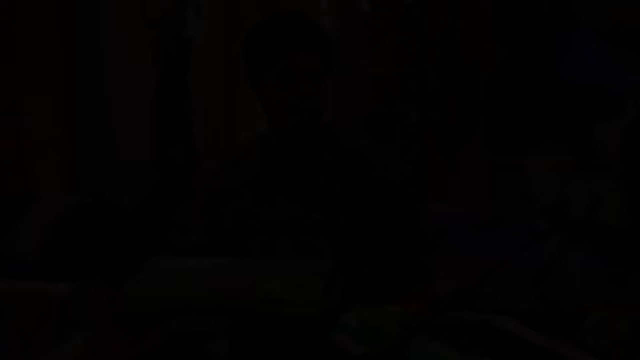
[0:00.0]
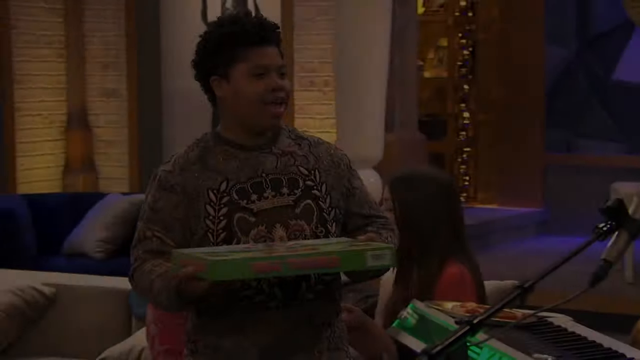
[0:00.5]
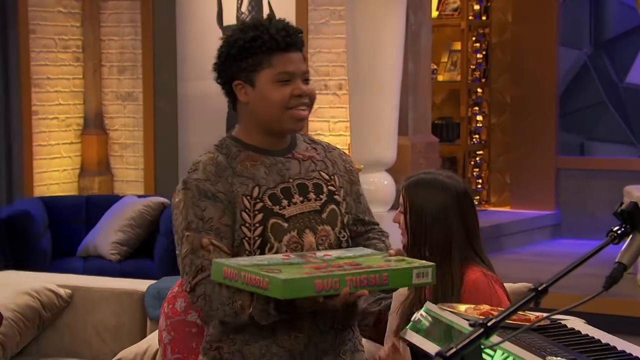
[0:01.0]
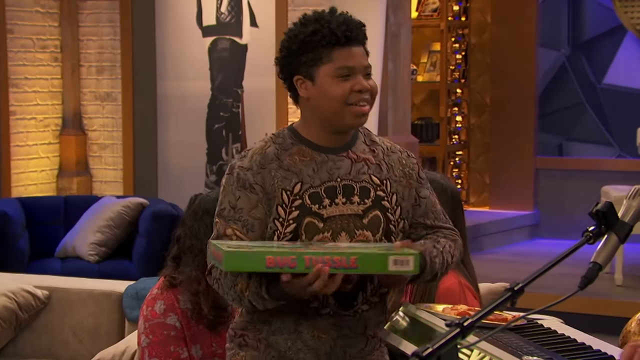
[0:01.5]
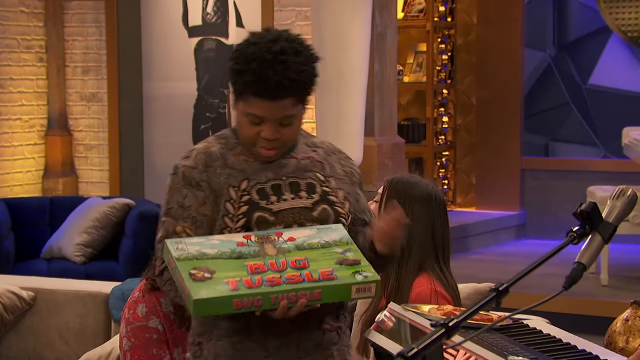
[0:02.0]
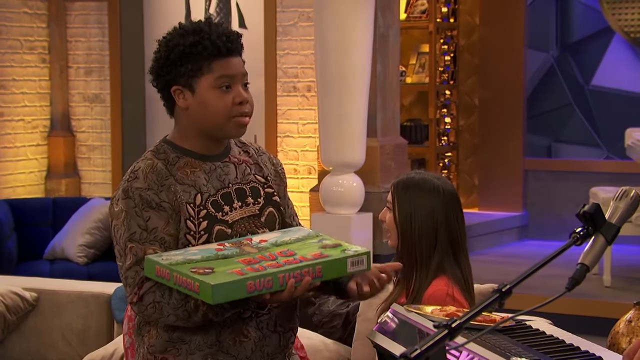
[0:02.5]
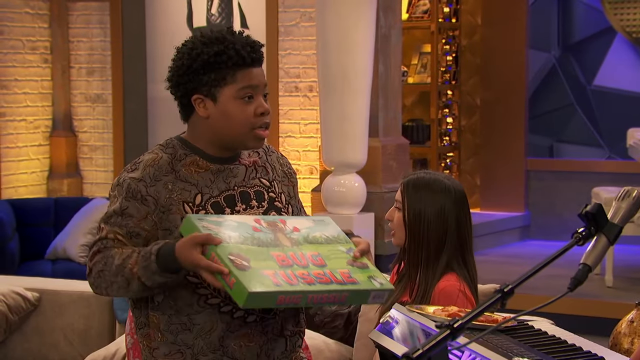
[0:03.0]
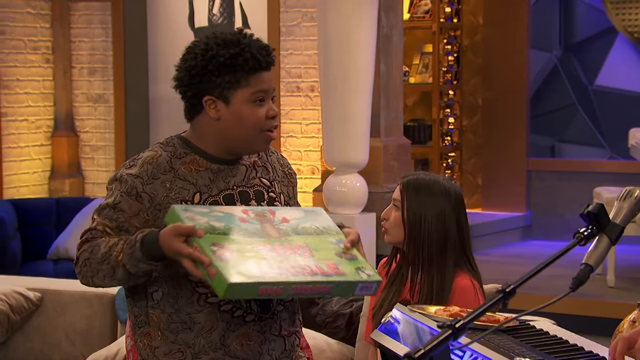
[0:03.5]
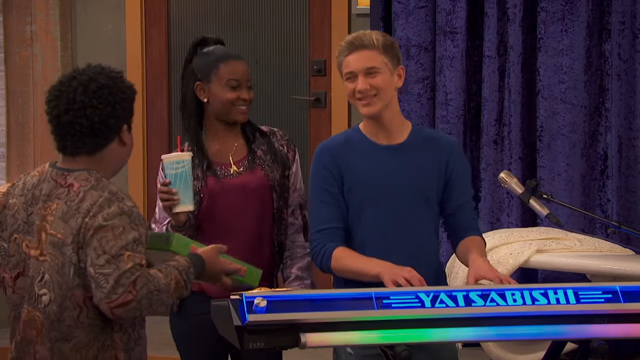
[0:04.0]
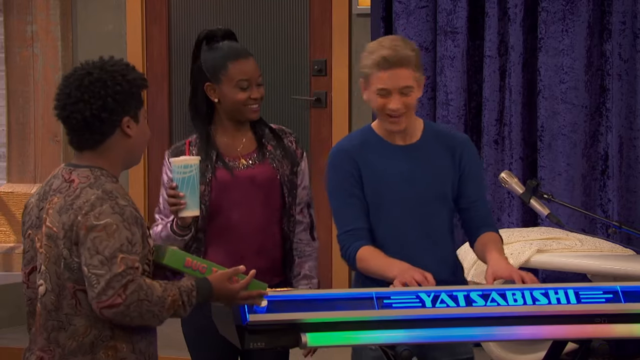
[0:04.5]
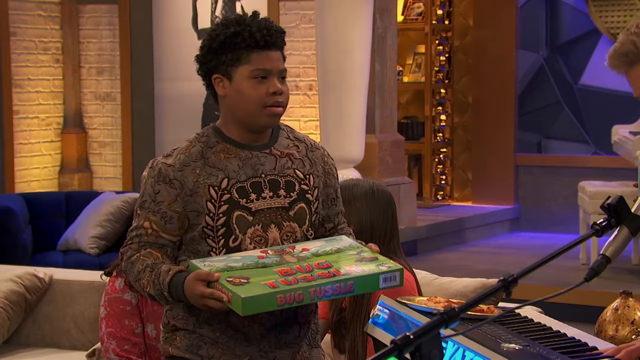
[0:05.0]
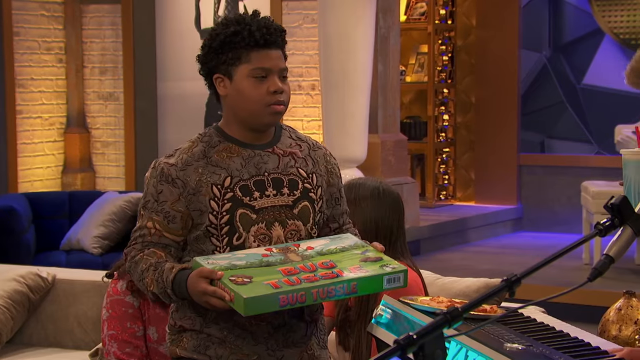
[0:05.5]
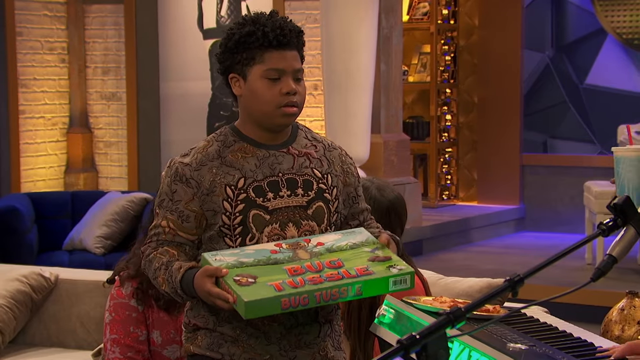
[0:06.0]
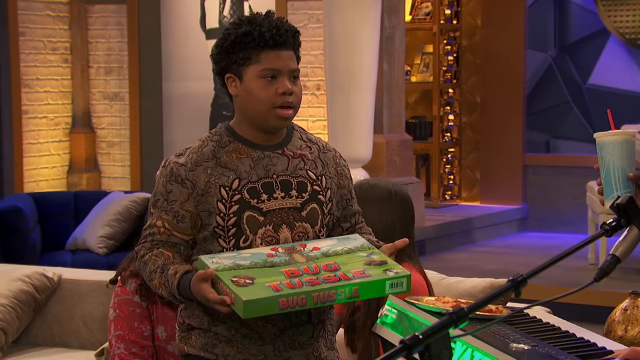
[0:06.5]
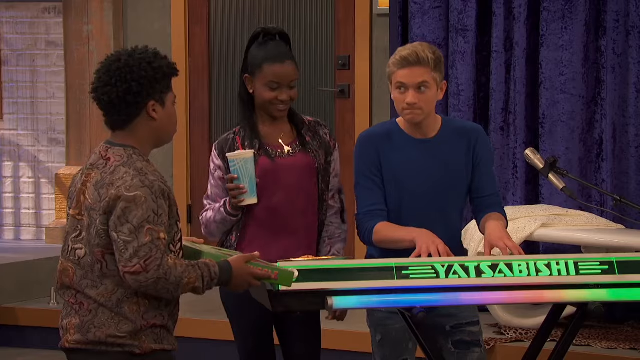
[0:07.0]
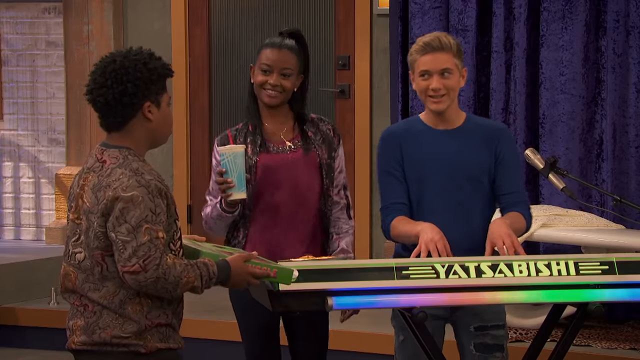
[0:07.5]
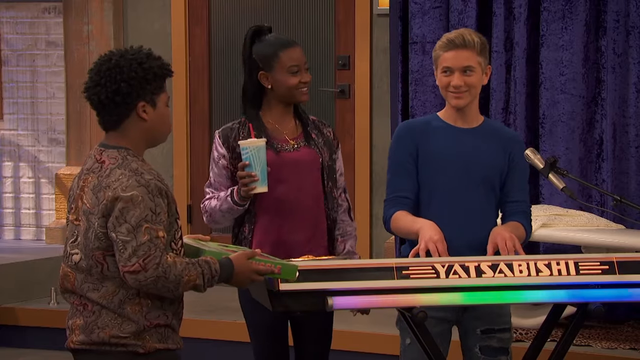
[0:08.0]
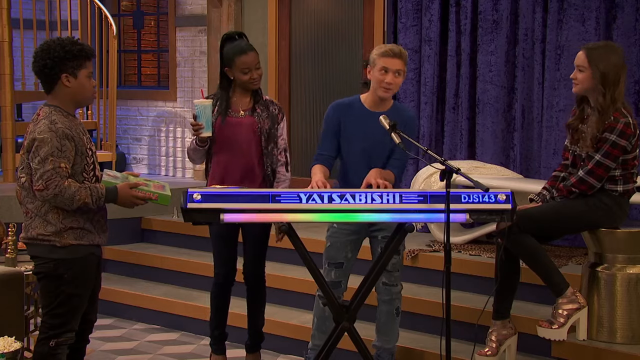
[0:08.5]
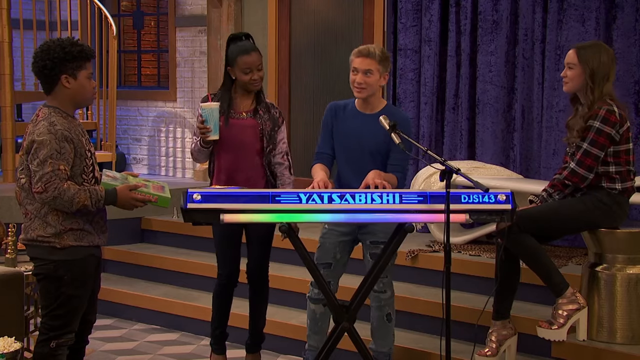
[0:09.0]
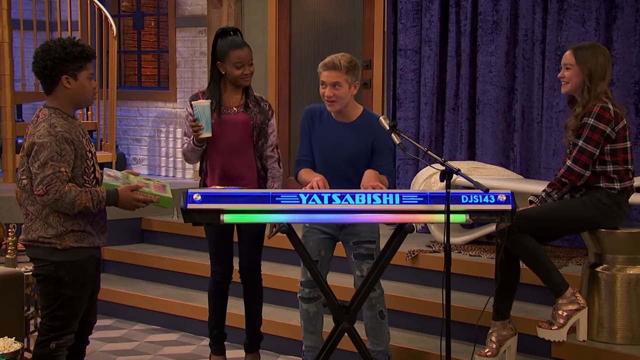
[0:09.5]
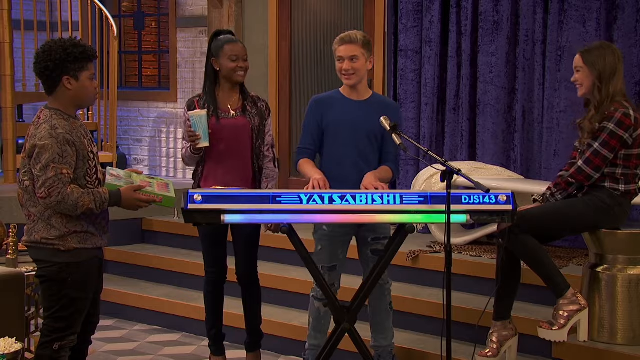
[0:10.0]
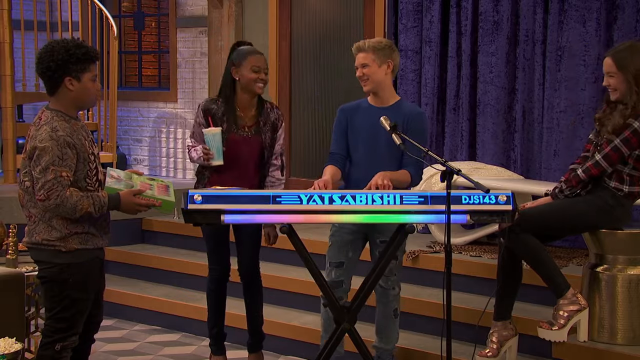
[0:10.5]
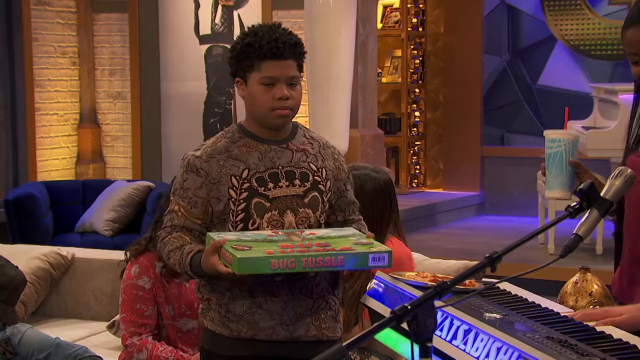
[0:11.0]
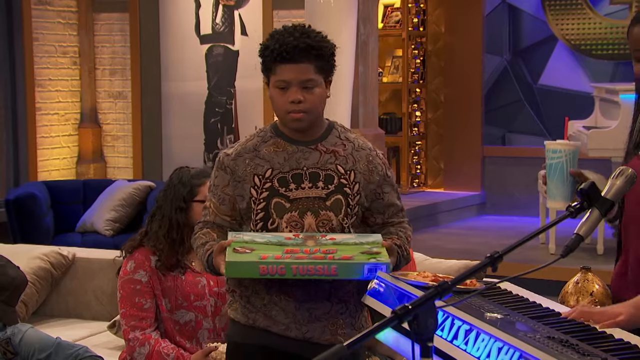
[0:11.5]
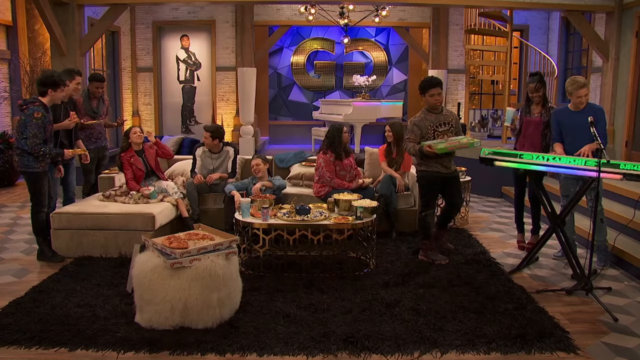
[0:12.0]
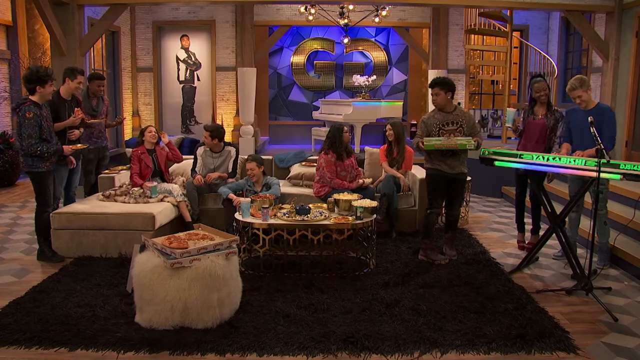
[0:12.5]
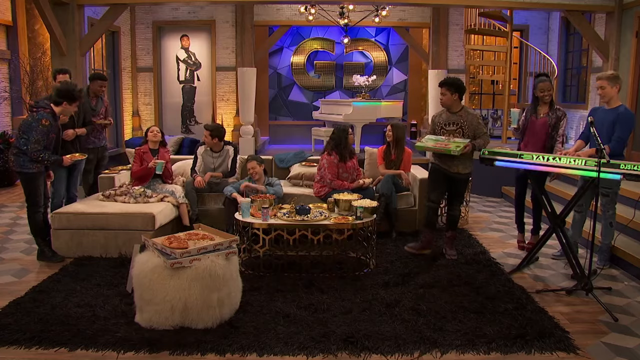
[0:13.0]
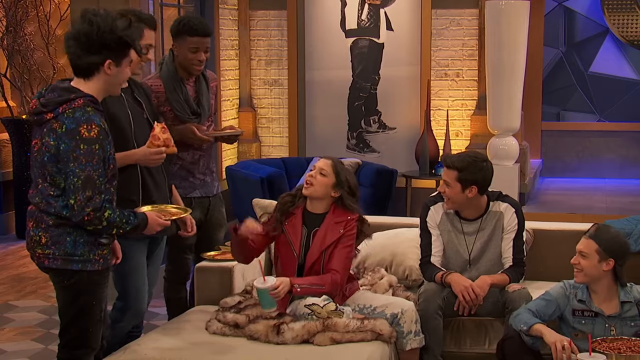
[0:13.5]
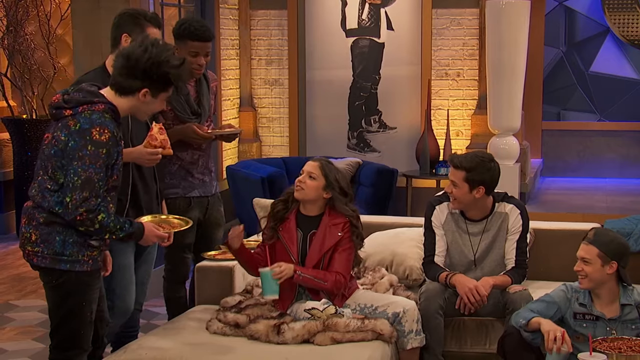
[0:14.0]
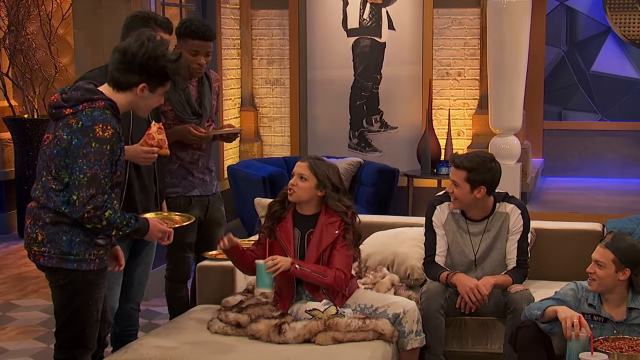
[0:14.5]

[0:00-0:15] A group of pre-teenagers or possibly young teenagers are together in a very social setting. They are of various races and appear to be fairly evenly balanced between African-American and white teenagers. One of them appears to be trying to talk another into playing a board game, but that teenager doesn't want to, as he appears to be playing a song on a musical instrument. The rest of the teens appear to be eating, drinking and having a great time sitting around the very spacious room. It feels like a busy party for young people.